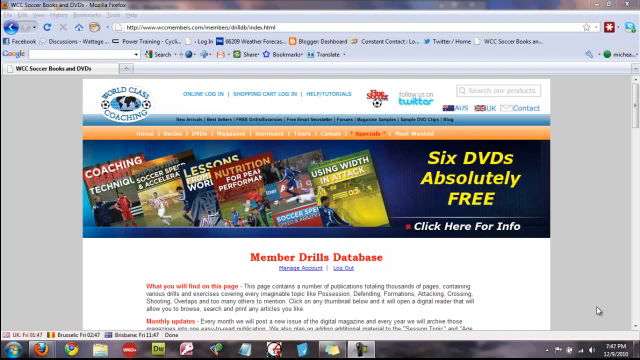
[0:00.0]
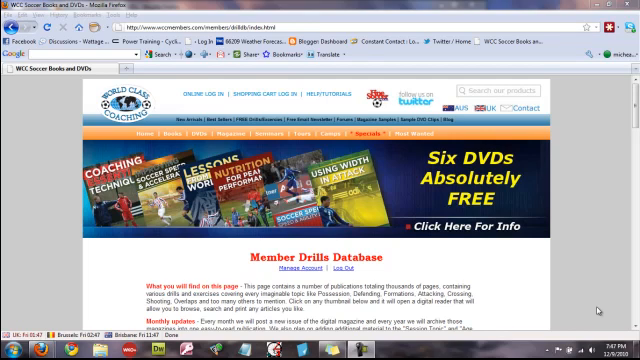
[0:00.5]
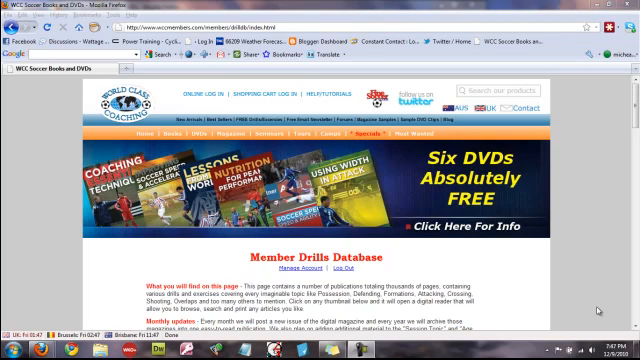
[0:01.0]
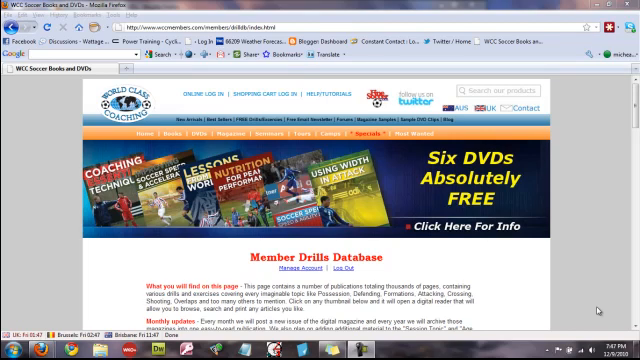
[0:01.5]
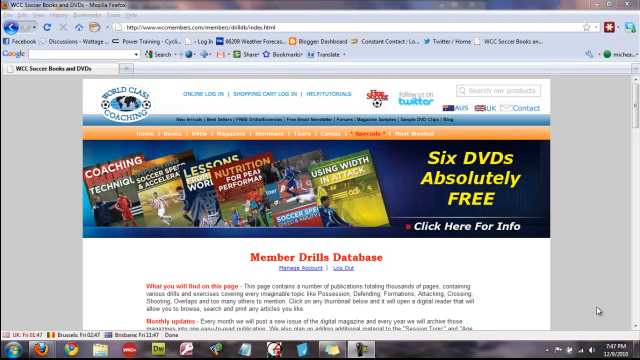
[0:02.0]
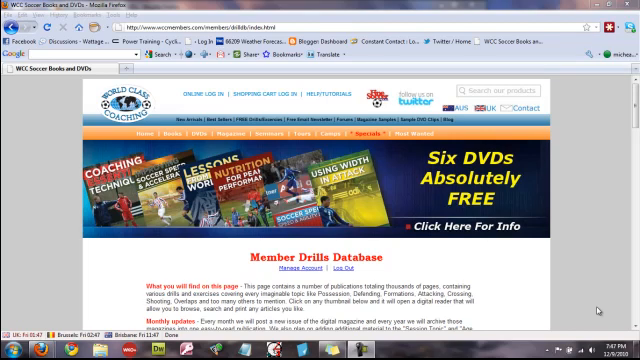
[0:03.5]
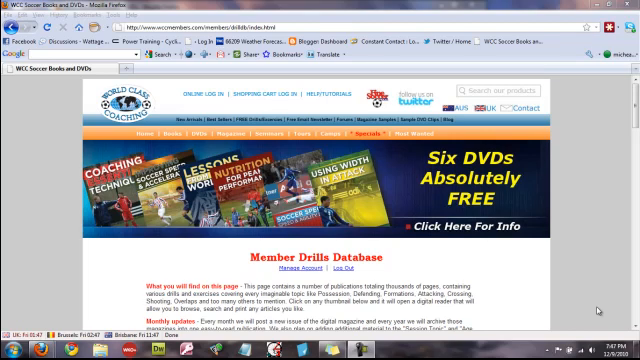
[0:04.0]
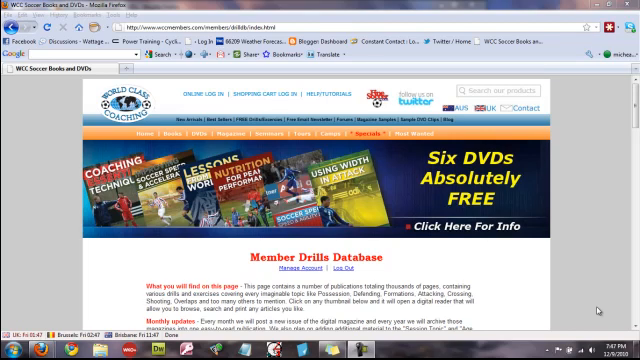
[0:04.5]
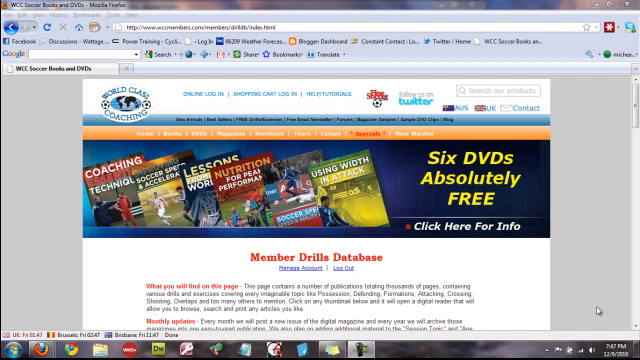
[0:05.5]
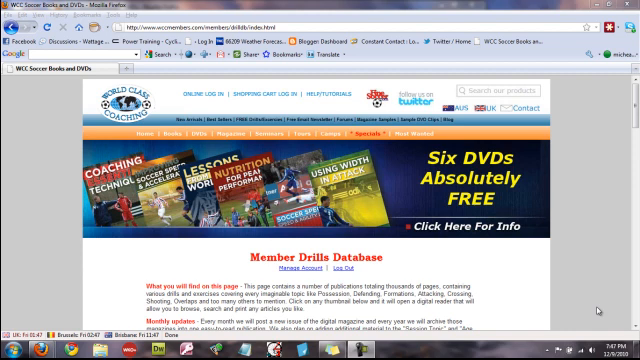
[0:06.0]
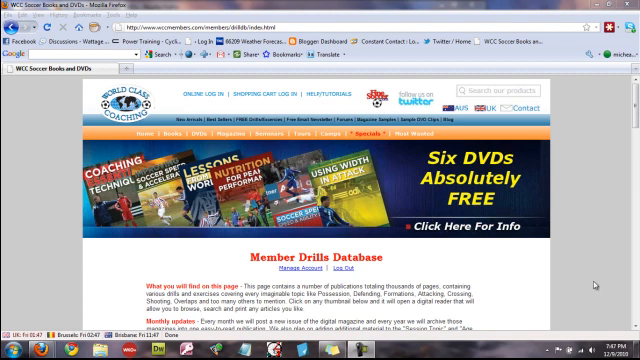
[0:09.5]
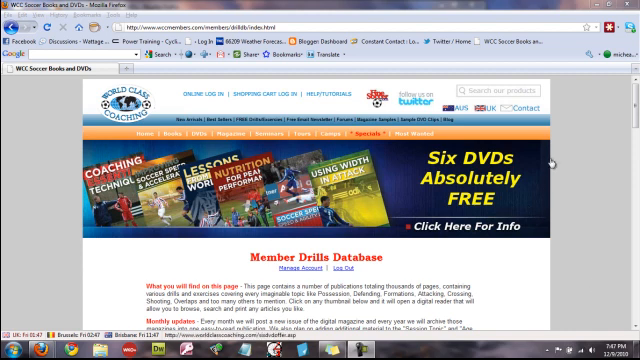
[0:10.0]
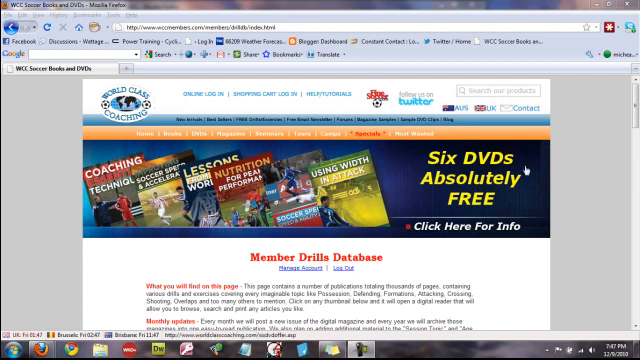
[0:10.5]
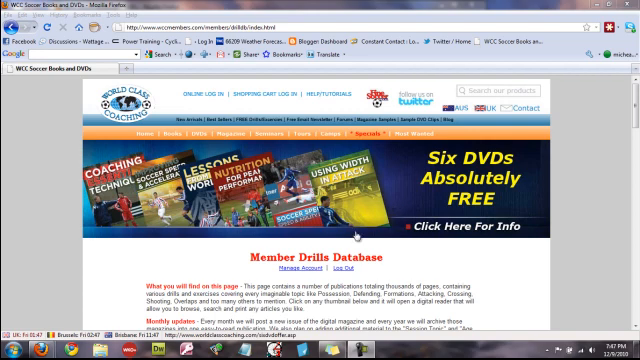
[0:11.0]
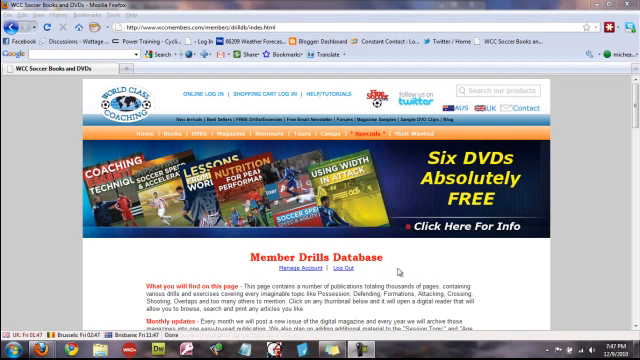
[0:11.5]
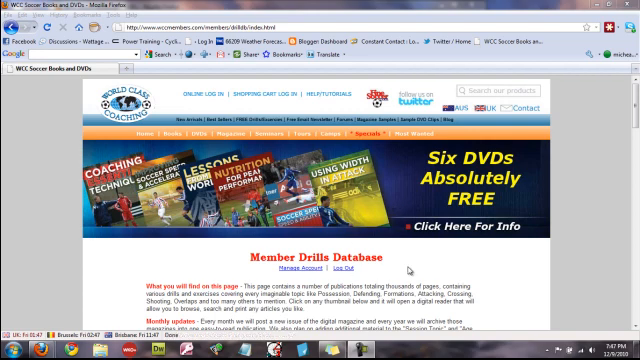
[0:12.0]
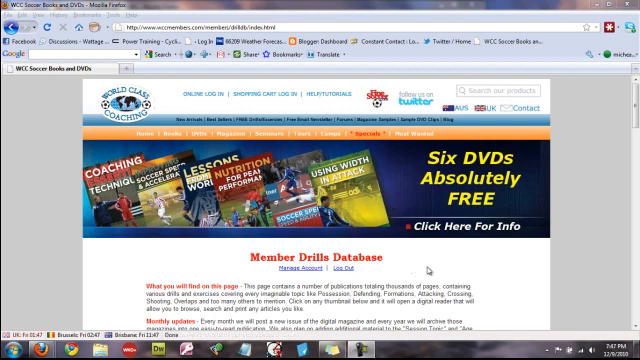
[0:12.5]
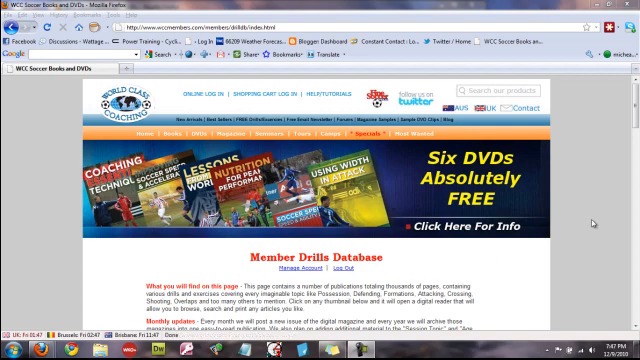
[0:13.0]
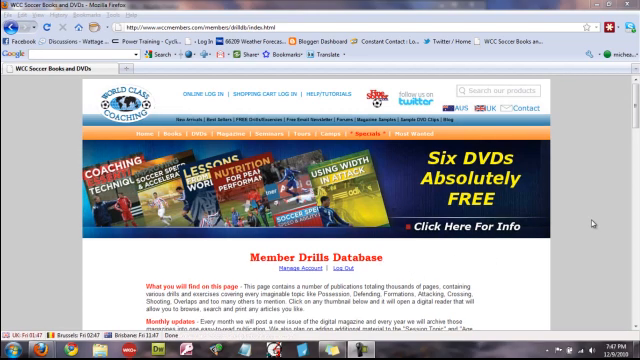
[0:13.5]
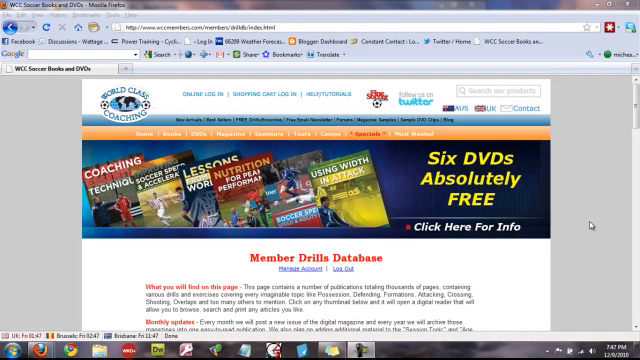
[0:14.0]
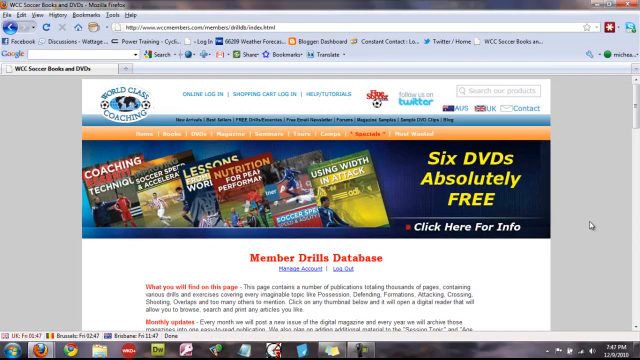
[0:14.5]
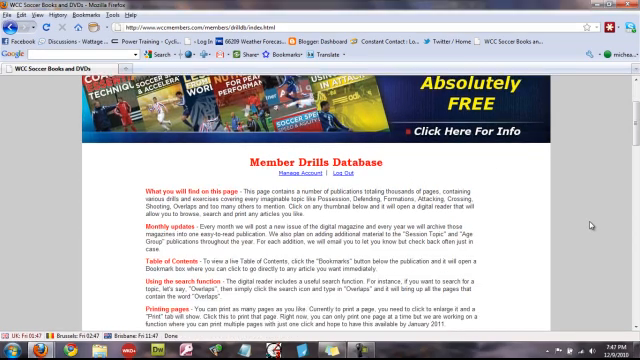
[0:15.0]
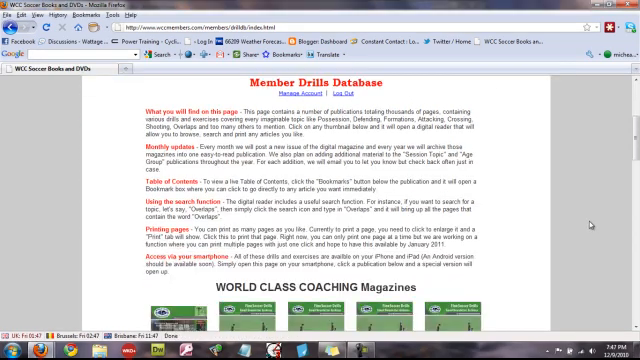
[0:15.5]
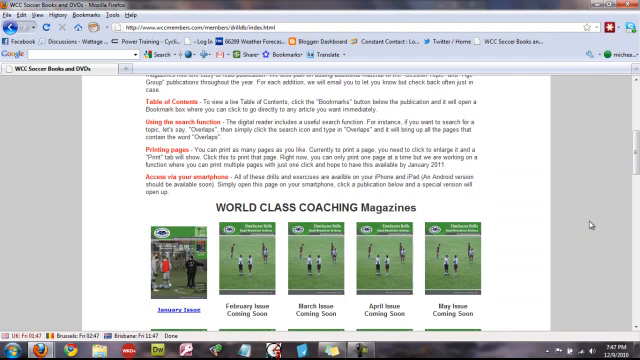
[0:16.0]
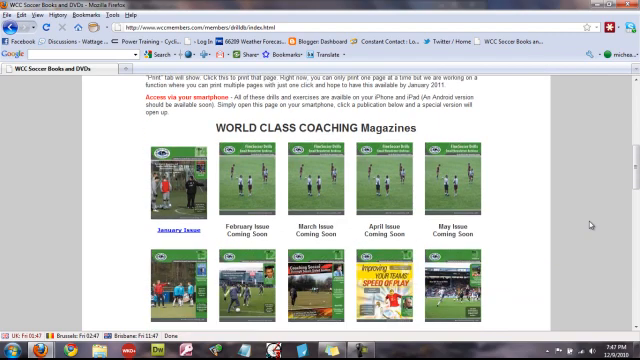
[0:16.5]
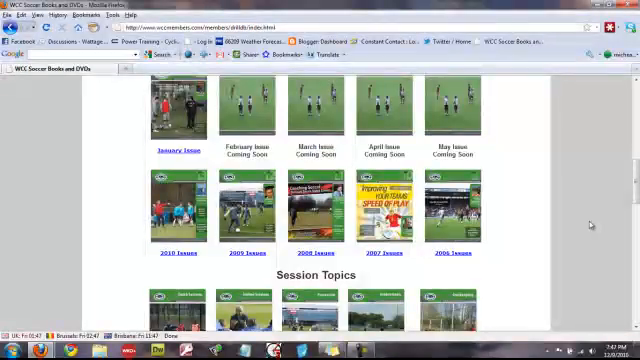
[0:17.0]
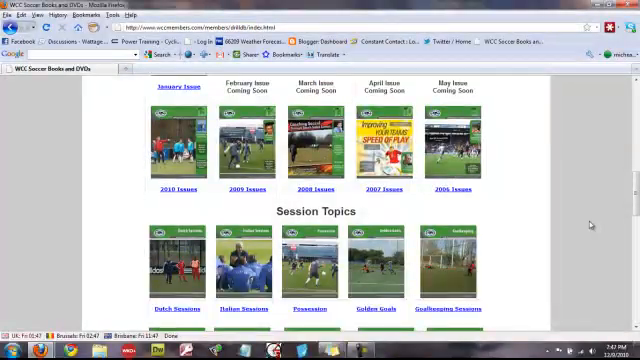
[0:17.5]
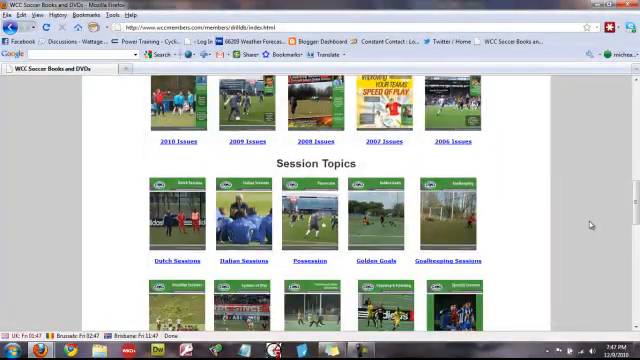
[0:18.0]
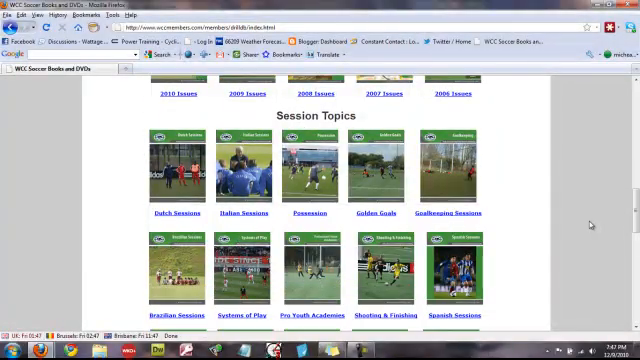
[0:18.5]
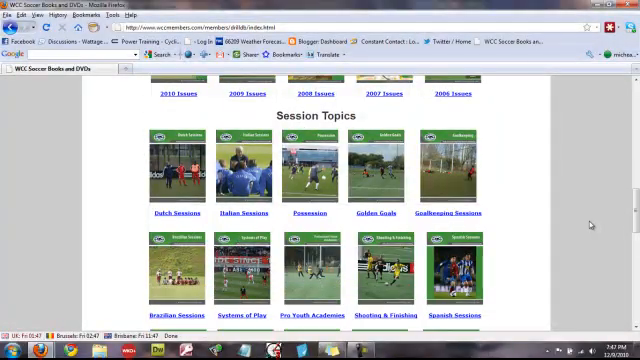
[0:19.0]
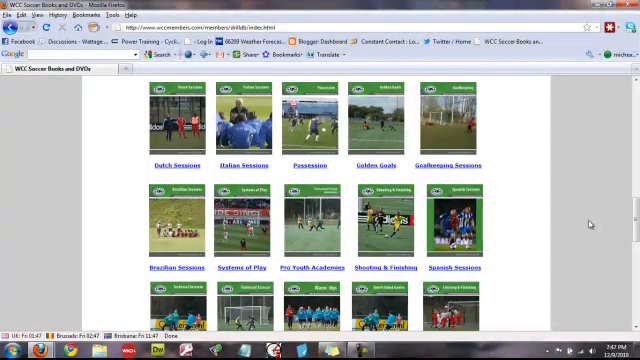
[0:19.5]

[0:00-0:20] The video opens on a webpage on a computer, with the typical webpage elements along the top. The page shows what look like magazines arranged from left to right. On the left one says "coaching"; to its right one says "soccer" or something similar, then one says "lessons" or something similar, then one says "nutrition", then there is another soccer magazine, and to the right of that the text reads "six DVDs absolutely free", so these are apparently DVDs. Below "free" it says "click here for info" in white letters. Below that, "member drills database" is written in red letters, and beneath it is some writing that is hard to make out; part of it says "what you will find on this page" in red letters, and in black letters it says "this page consists of a number of publications totaling thousands of pages". The mouse cursor, a white arrow pointing toward the top of the screen, moves over by the word "database" and then moves to the right of the screen. The scroll bar then starts scrolling down, showing several DVDs on the page.